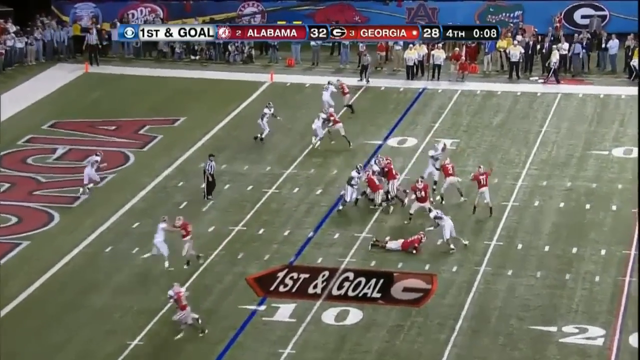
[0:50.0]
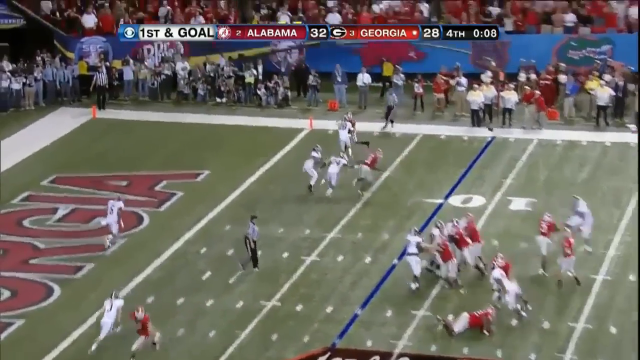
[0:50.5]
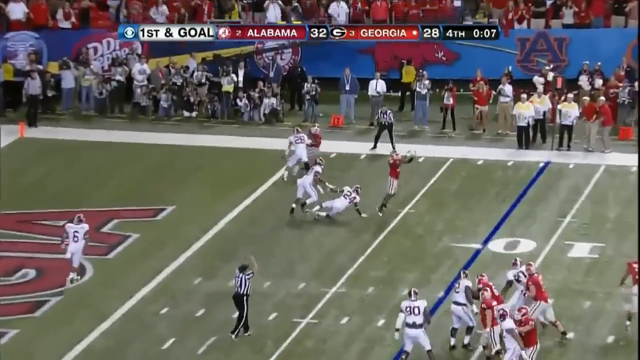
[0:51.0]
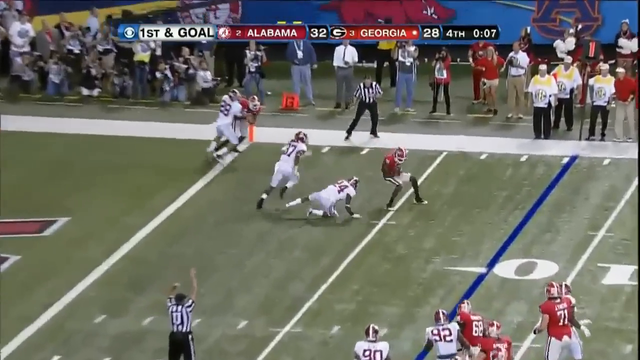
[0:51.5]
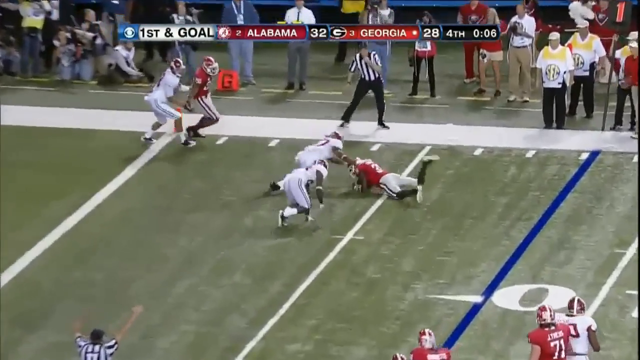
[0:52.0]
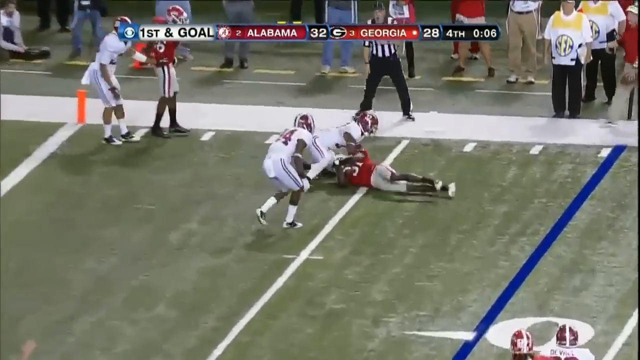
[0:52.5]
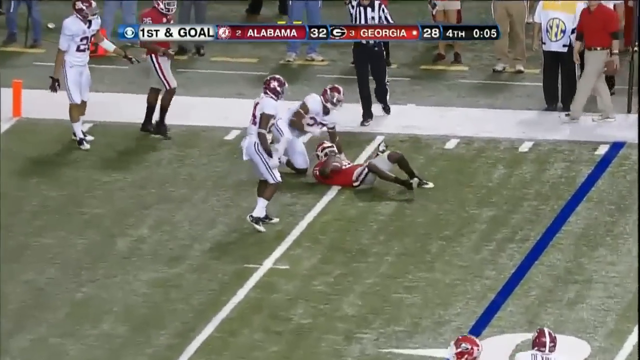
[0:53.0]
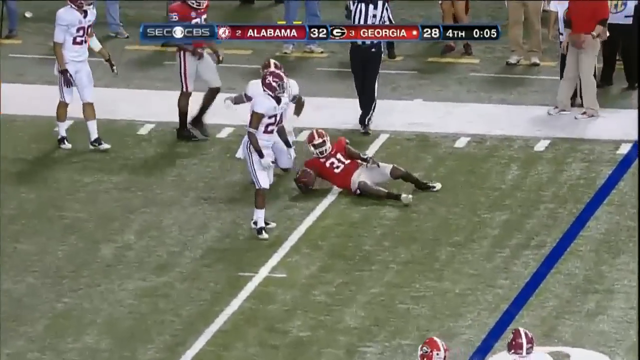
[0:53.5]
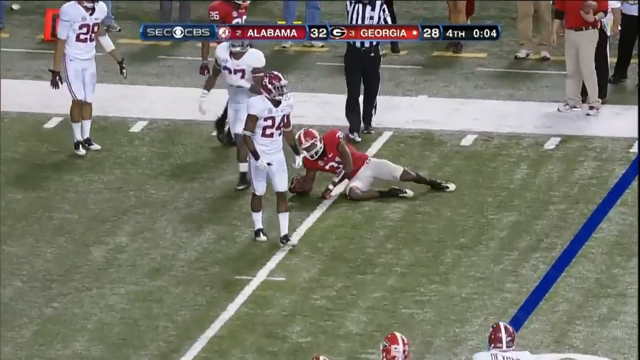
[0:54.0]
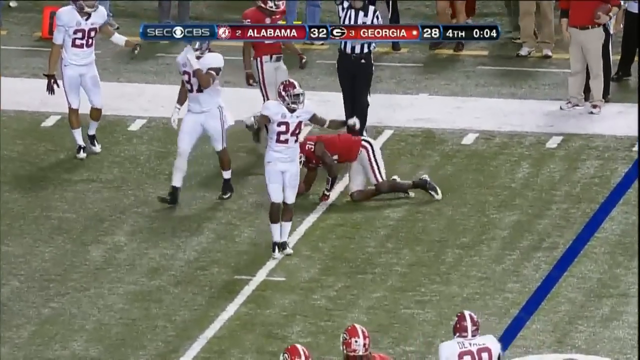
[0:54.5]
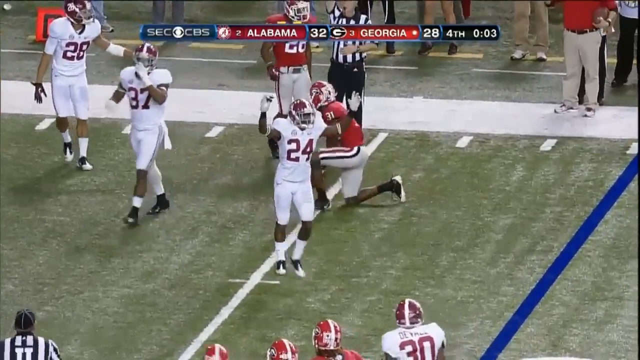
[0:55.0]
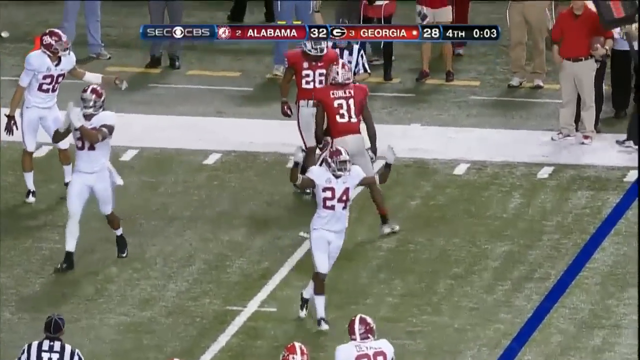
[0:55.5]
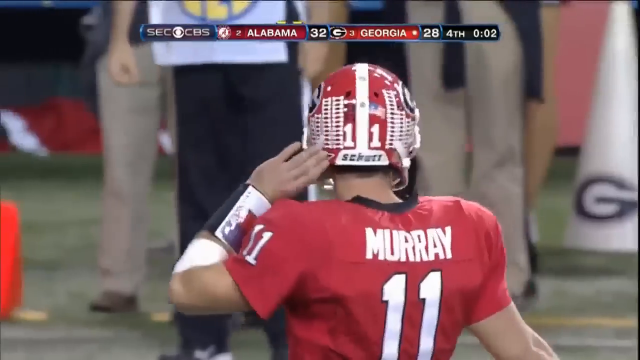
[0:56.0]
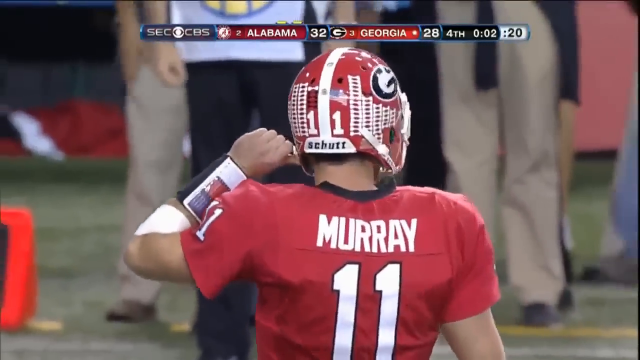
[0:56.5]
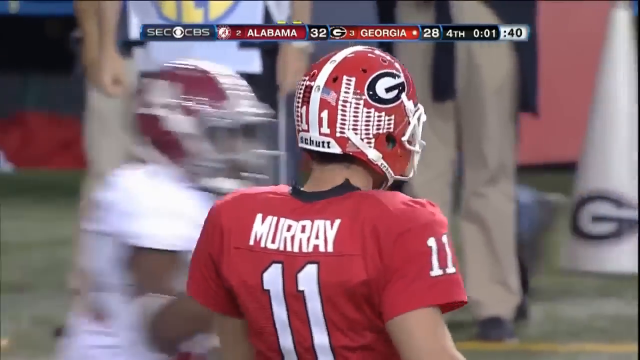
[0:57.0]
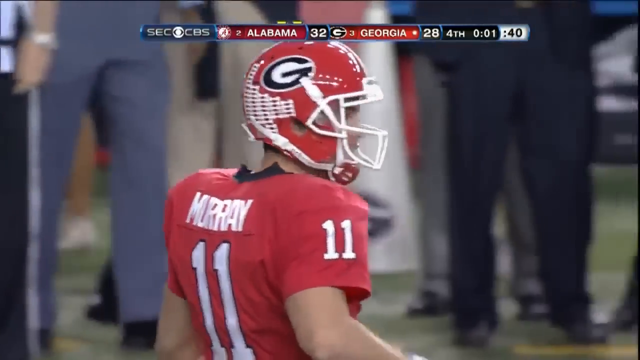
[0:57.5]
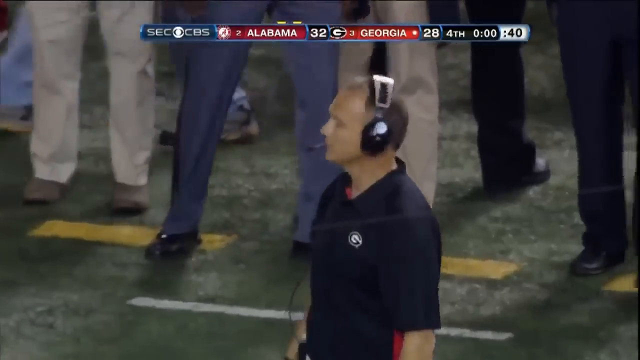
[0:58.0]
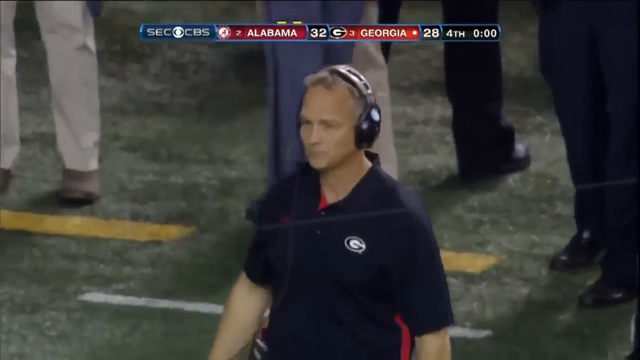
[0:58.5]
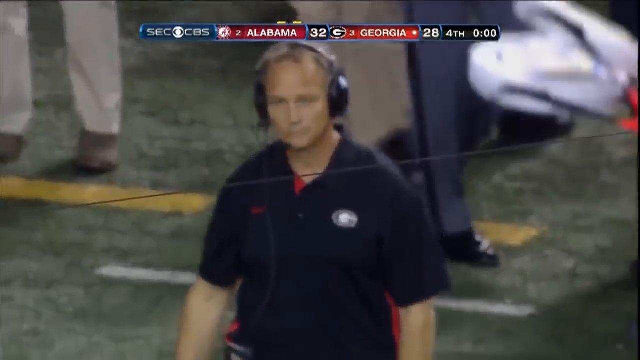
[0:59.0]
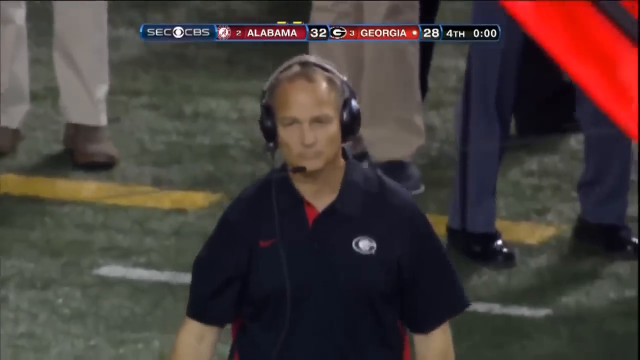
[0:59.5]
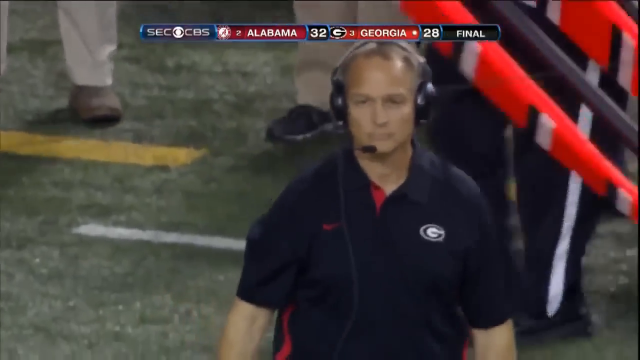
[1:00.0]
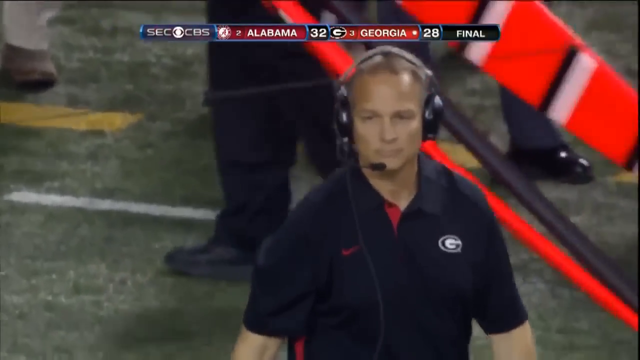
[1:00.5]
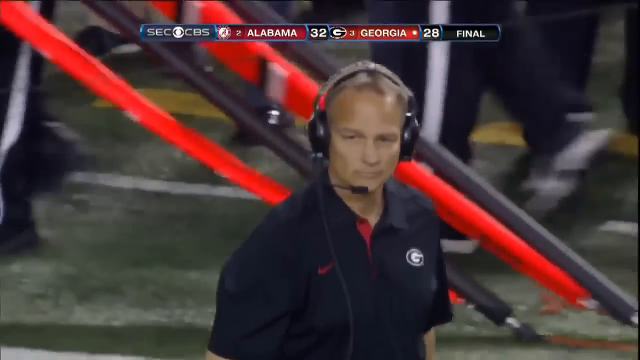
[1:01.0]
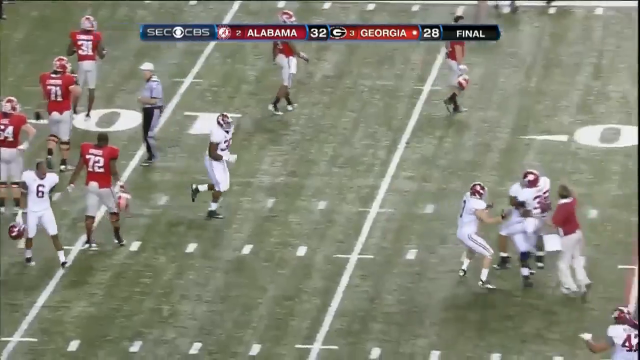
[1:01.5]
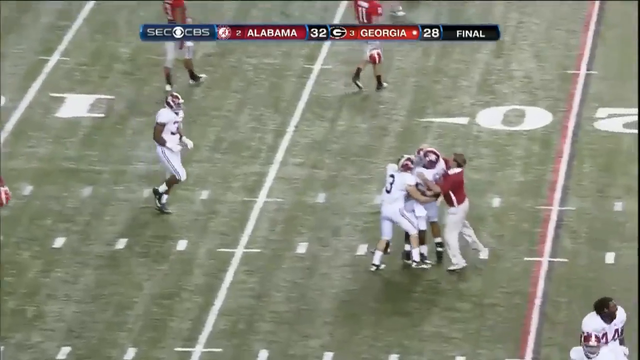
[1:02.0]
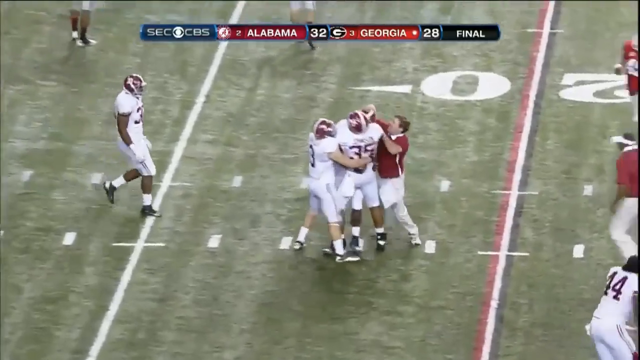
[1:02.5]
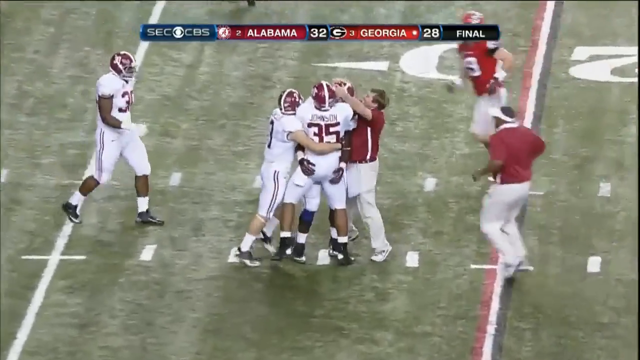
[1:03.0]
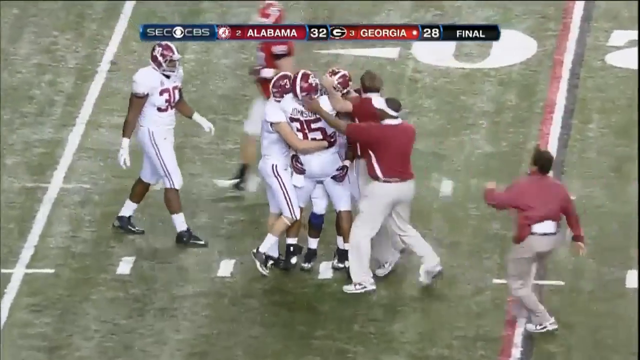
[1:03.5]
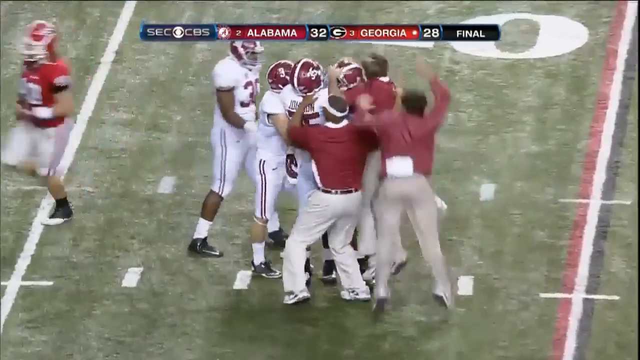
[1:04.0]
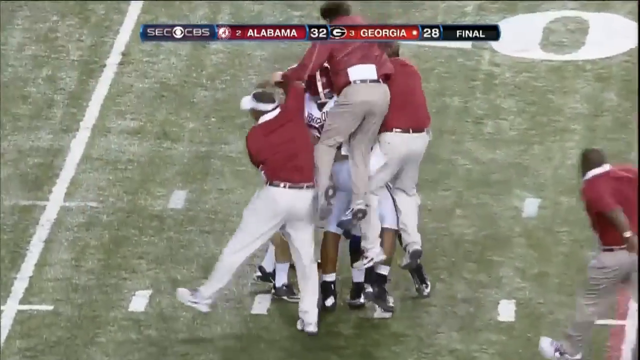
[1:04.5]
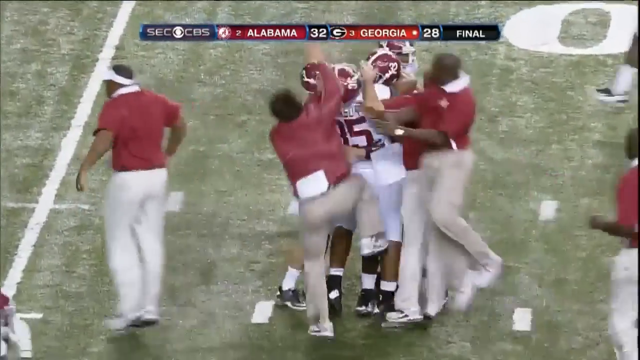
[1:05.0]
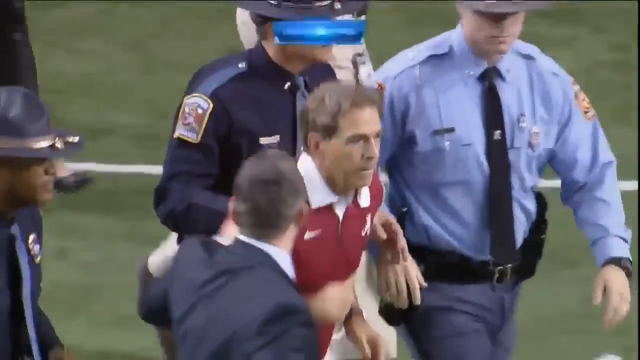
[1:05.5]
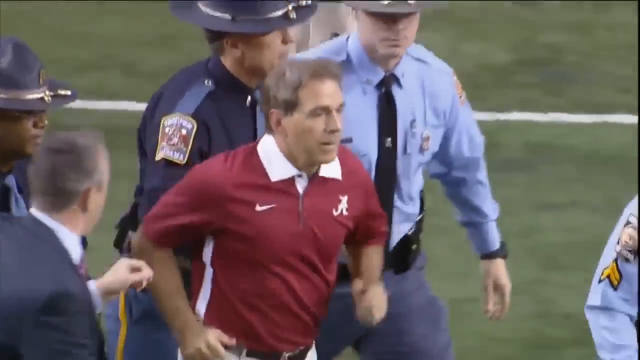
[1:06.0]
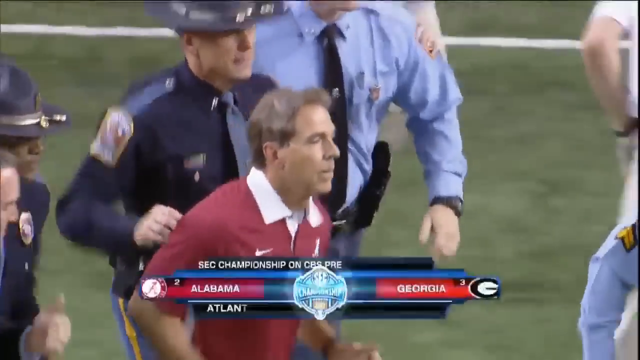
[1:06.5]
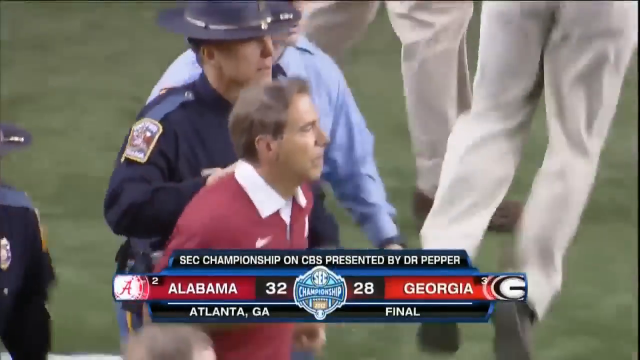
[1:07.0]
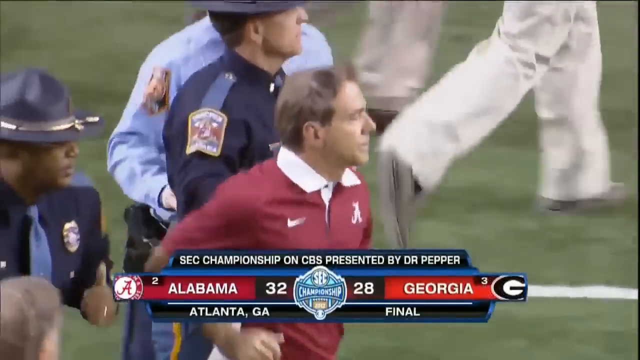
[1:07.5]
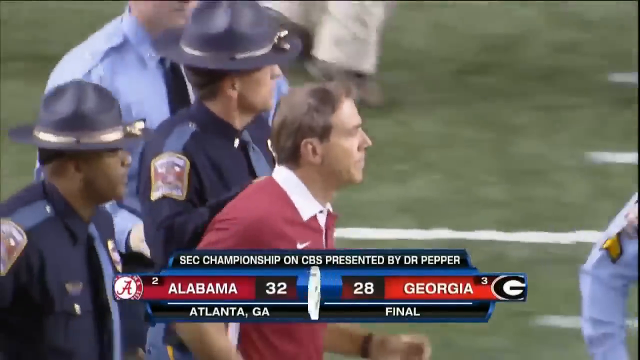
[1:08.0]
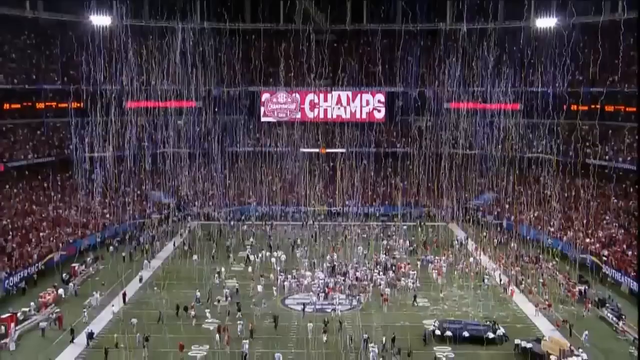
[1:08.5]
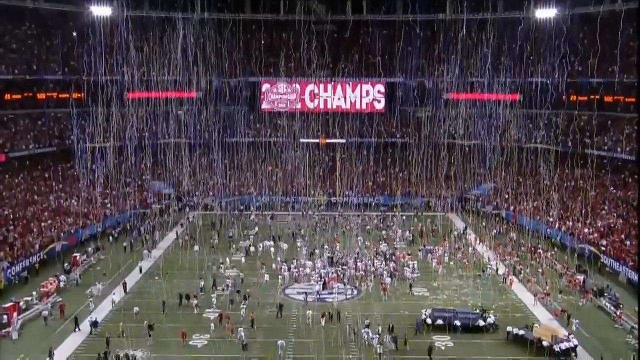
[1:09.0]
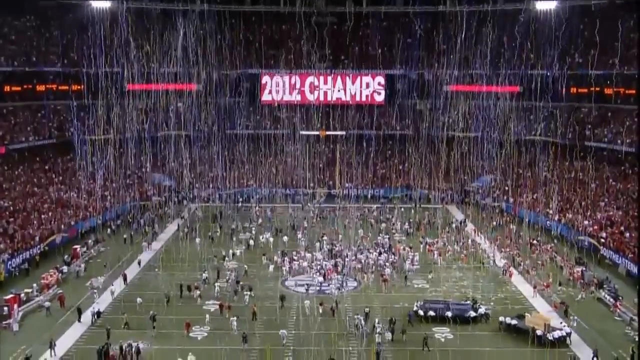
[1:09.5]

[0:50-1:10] In the same scene, the quarterback is on the middle right, standing on about the 14-yard line, looking to the right as his players run down toward the end zone, getting ready to throw. "First and goal" is shown at the bottom middle of the video, and the scoreboard at the top middle also reads "first and goal", with Alabama at 32 points, Georgia at 28, and eight seconds remaining in the fourth quarter. The quarterback throws to the right, where there are three defenders in white jerseys and another receiver in a red jersey besides the one who catches it. The player catches it at about the five-yard line with his back toward the defenders in white, then falls onto the ground and is touched by a defender. The clock runs down from three seconds to two to one, and the game ends without the player getting into the end zone. Shots of the sideline show a coach with white skin wearing black headphones and a black shirt with a small G on the left side of the chest, looking very disappointed. The scene changes to players in white jerseys celebrating and jumping on top of each other with the coaches, then to one of the coaches in red shirts, with an A on the left side of the chest, running to the right. A scoreboard appears at the bottom middle of the video reading Alabama 32, Georgia 28, and "final".